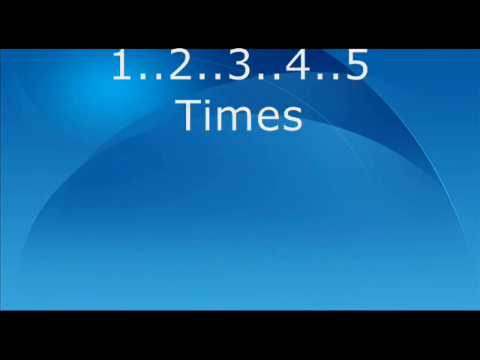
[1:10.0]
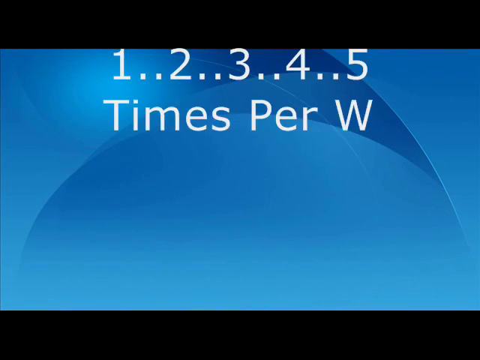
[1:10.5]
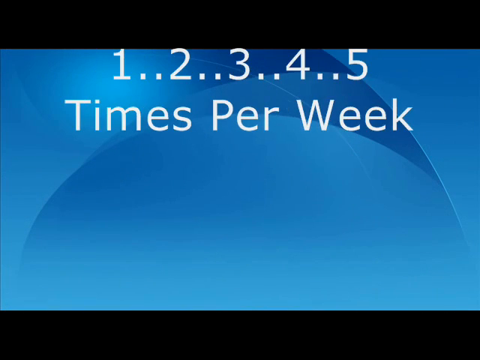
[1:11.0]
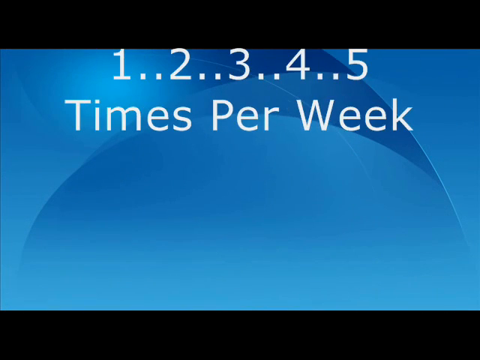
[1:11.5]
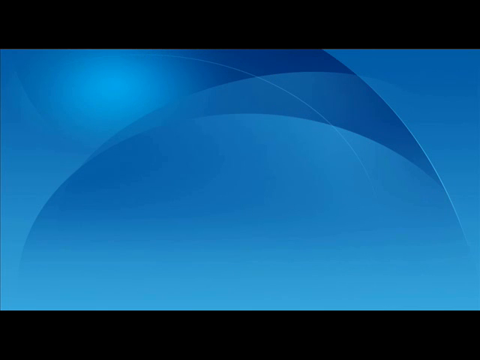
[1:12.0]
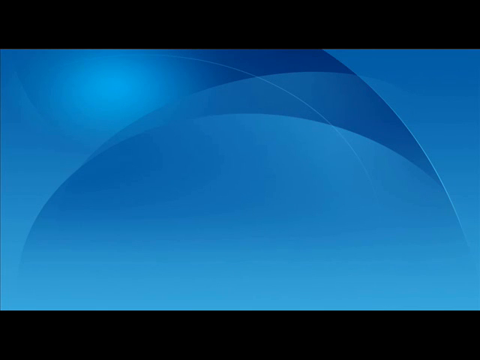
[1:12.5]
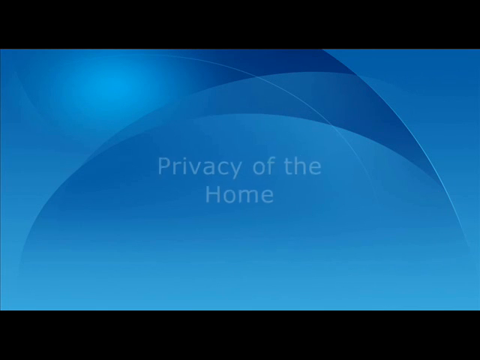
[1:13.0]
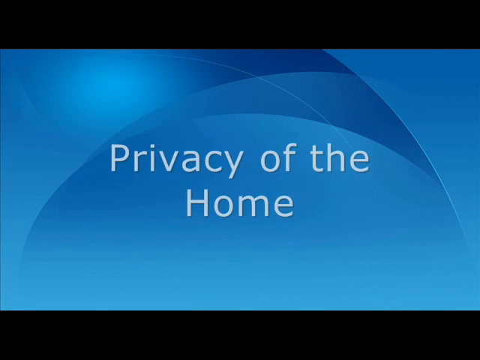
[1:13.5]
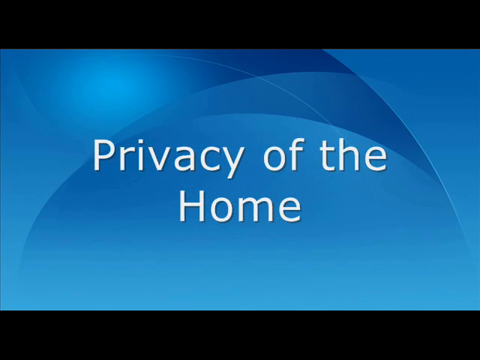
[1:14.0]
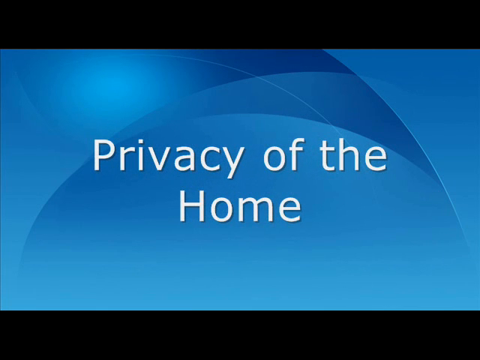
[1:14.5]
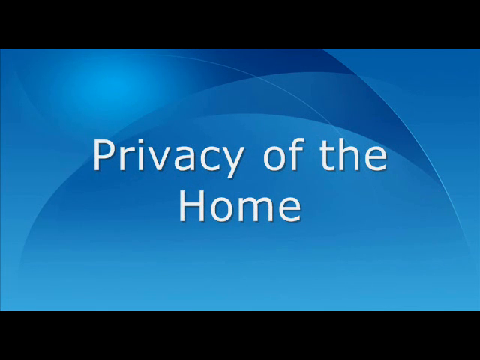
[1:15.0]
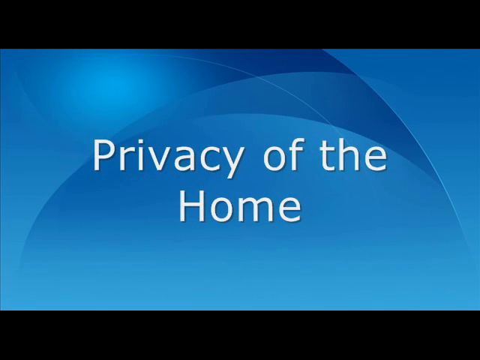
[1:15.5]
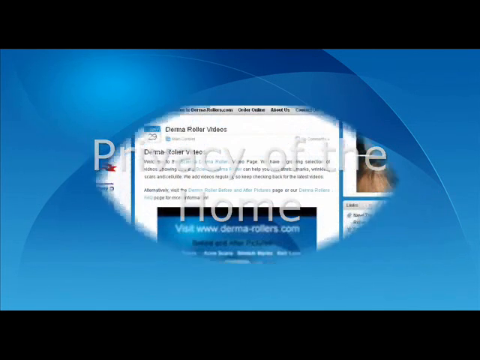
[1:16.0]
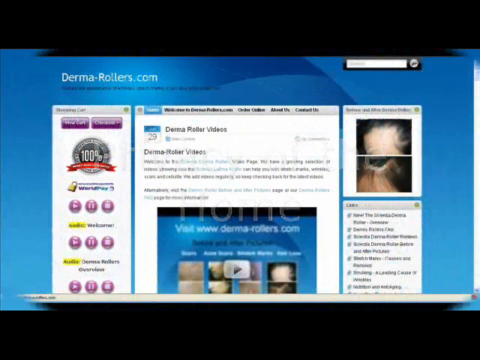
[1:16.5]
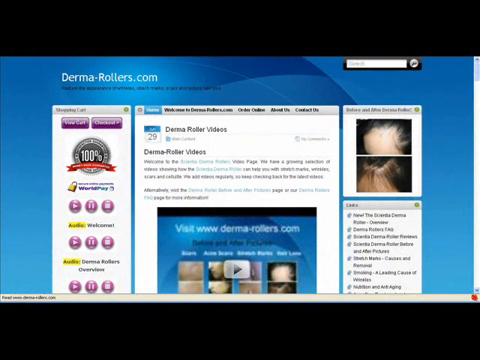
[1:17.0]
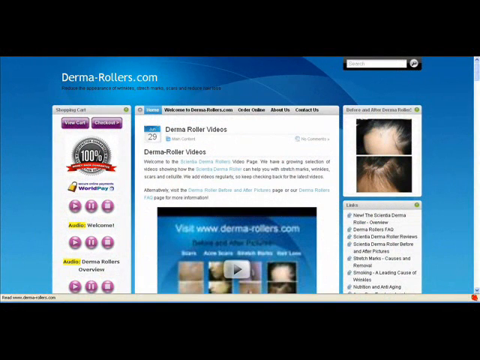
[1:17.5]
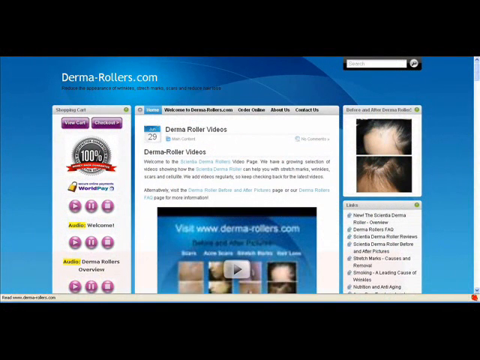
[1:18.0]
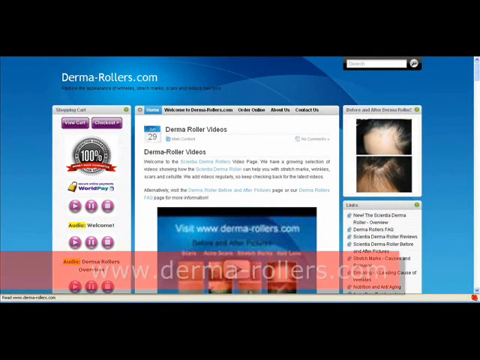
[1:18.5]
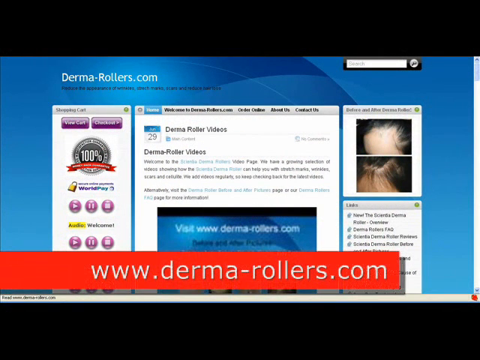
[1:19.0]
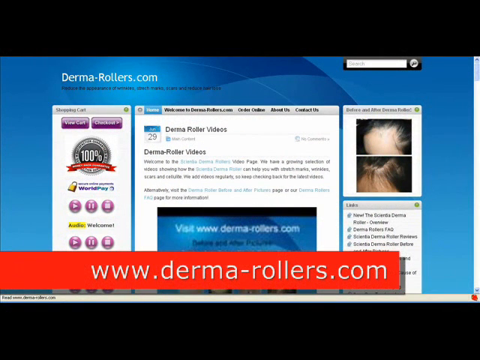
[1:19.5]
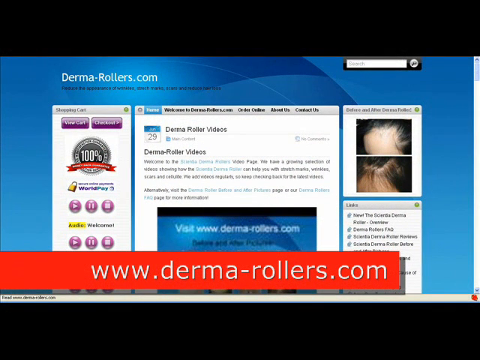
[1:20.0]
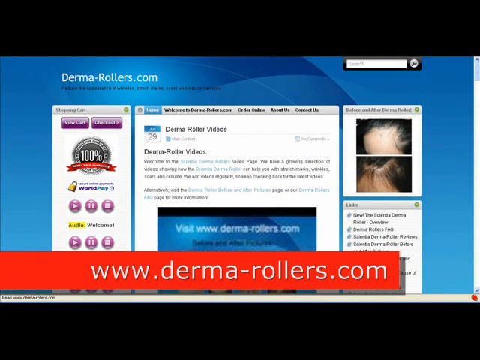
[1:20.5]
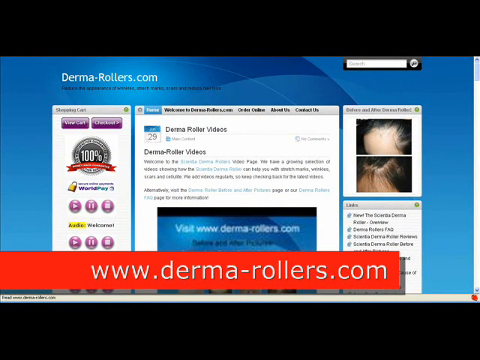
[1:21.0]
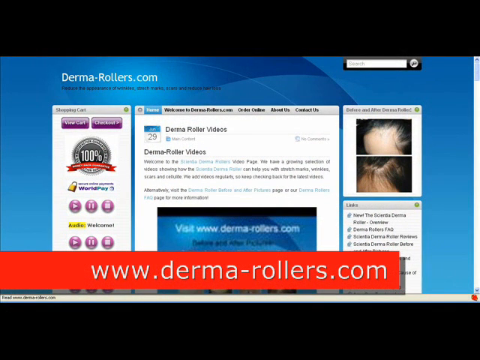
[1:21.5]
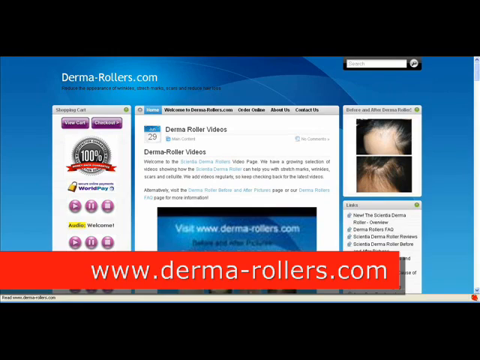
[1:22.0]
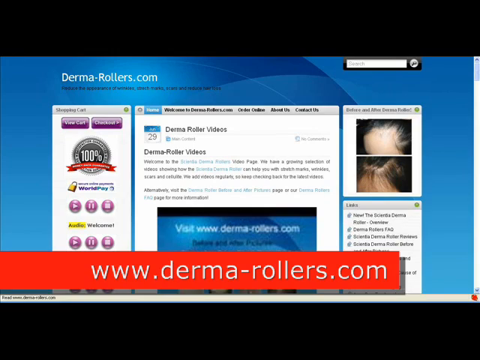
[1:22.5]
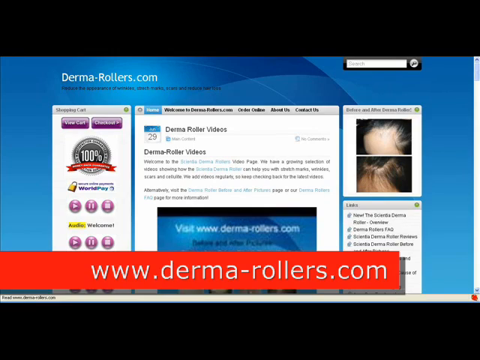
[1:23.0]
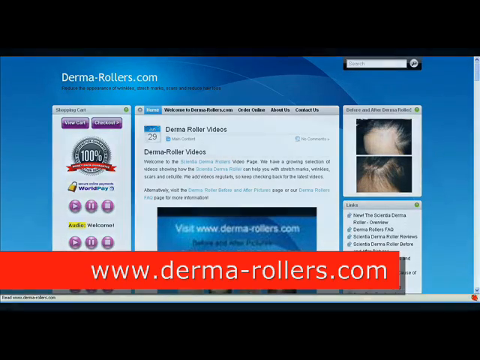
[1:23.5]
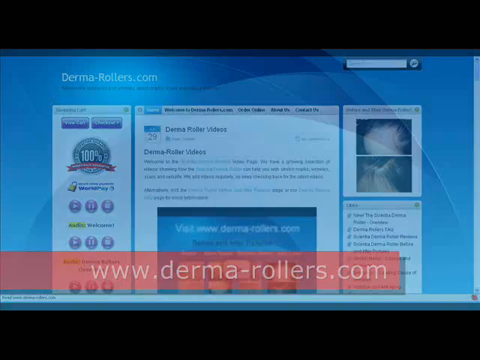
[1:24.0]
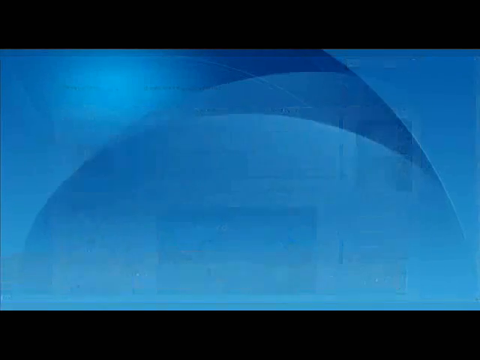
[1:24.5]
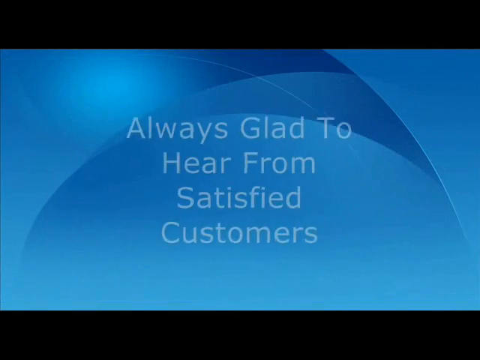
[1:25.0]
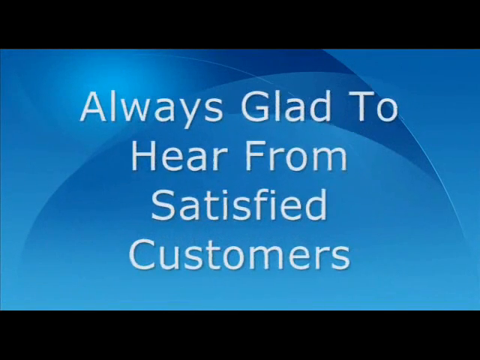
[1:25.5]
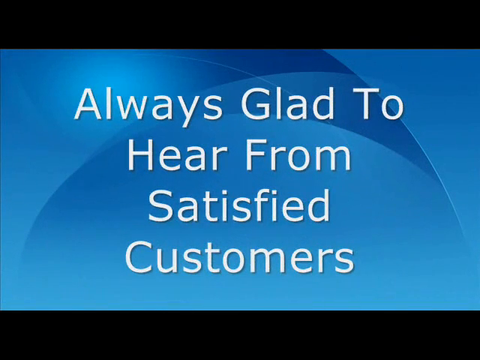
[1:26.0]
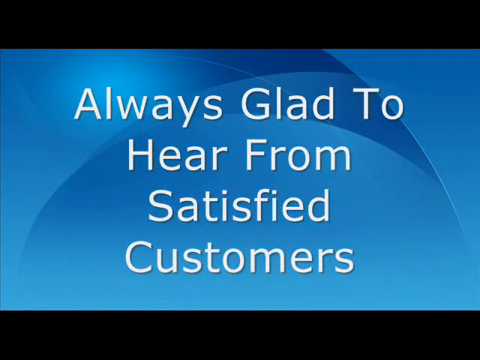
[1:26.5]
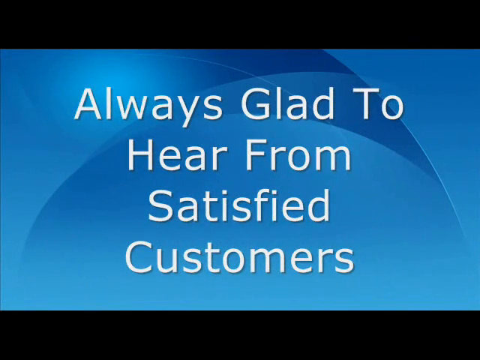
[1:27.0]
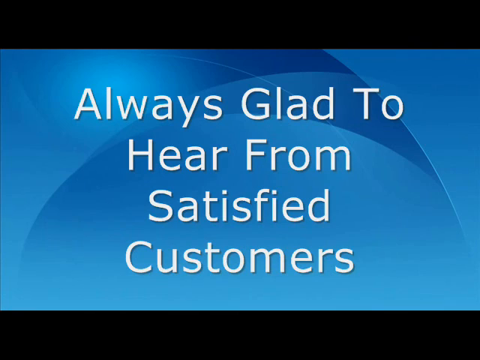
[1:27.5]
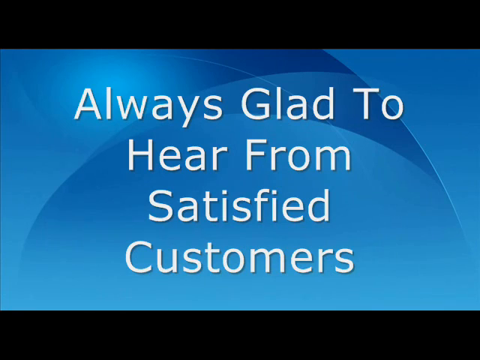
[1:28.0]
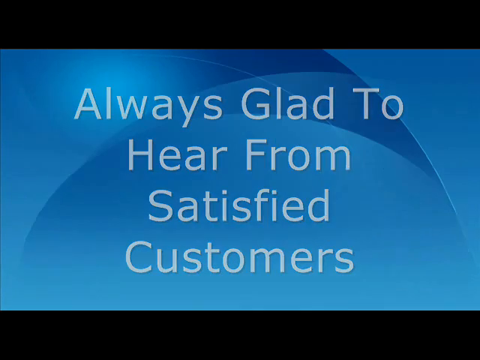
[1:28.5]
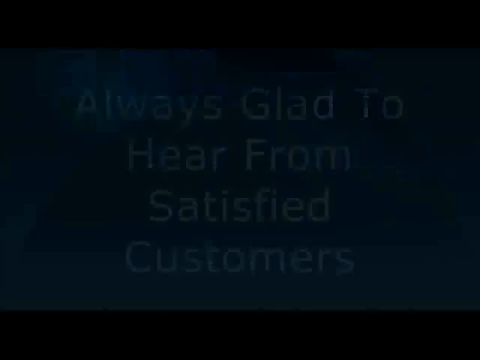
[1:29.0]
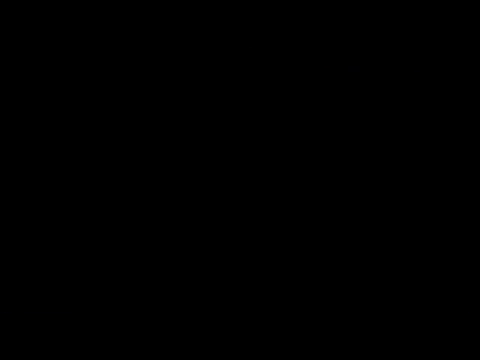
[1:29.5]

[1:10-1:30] A blue background shows white text reading "1, 2, 3, 4, 5 times per week." The text disappears, and new text appears reading "privacy of the home." That text fades away, and a circle transition leads to a screen grab of a website, with the URL "derma-rollers.com" at the top. The website has multiple sections. The left column, labeled "shopping cart," shows various guarantees and a checkout and view cart option. The center, the main body of the page, shows an article posted on August 29th named "Derma Roller Videos," with a YouTube video link in the body of the article. The top right corner of the webpage shows a before-and-after image of a balding man regaining his hair, and the bottom right has multiple links to various areas of the webpage. A red banner appears with the URL "www.dermarollers.com" inside it. The screen grab disappears, leaving a blue background with white text reading "always glad to hear from satisfied customers."